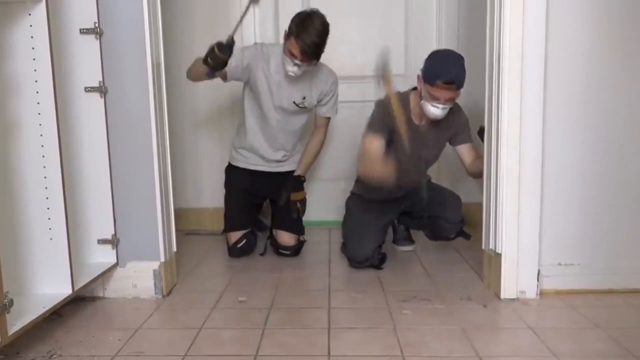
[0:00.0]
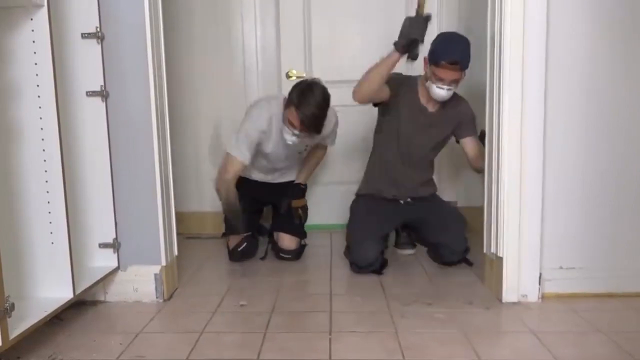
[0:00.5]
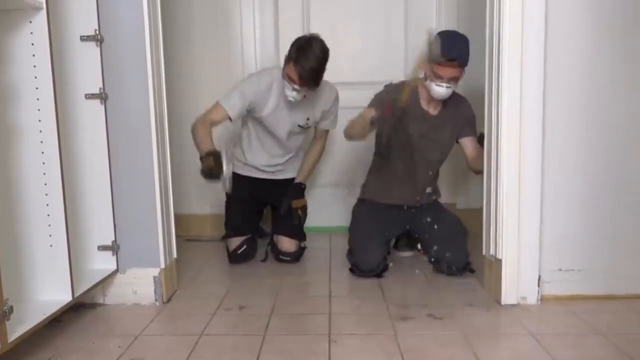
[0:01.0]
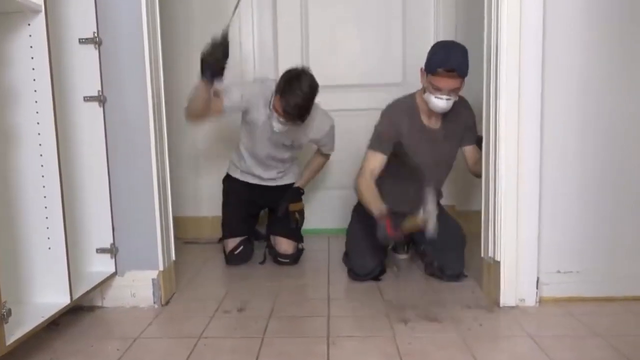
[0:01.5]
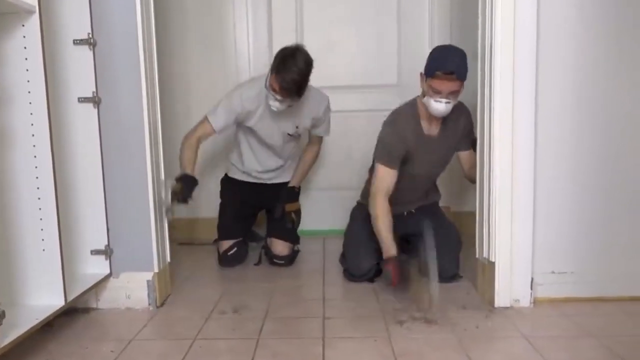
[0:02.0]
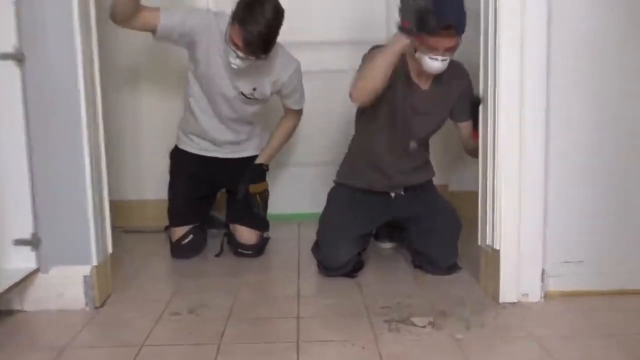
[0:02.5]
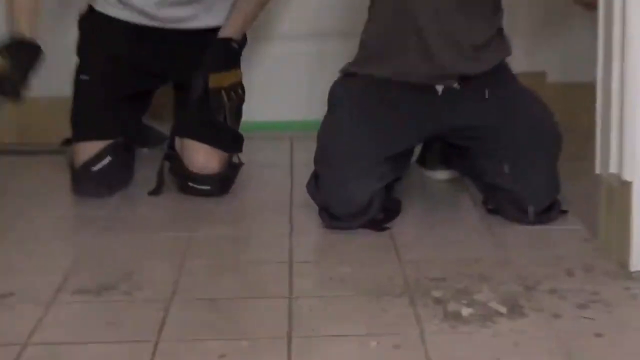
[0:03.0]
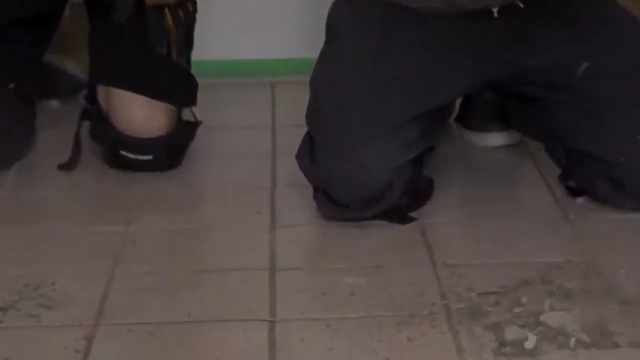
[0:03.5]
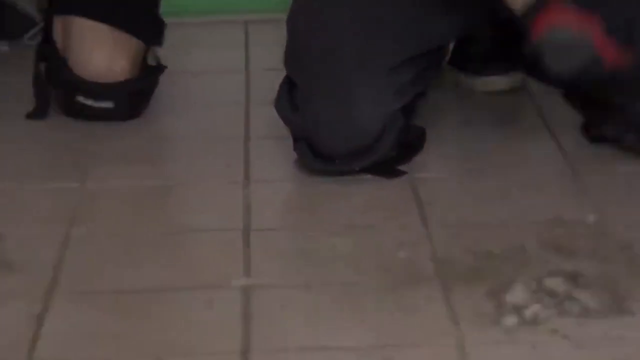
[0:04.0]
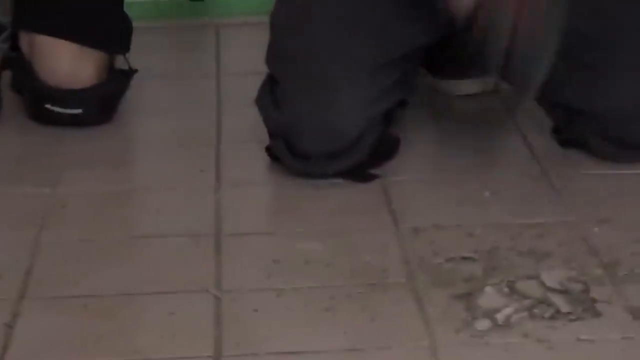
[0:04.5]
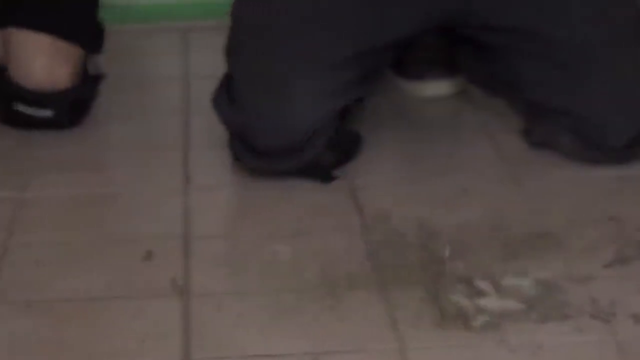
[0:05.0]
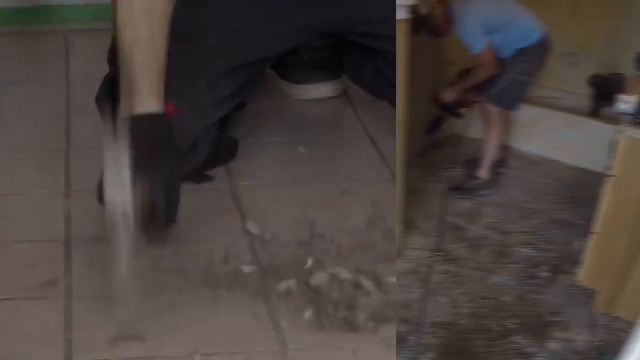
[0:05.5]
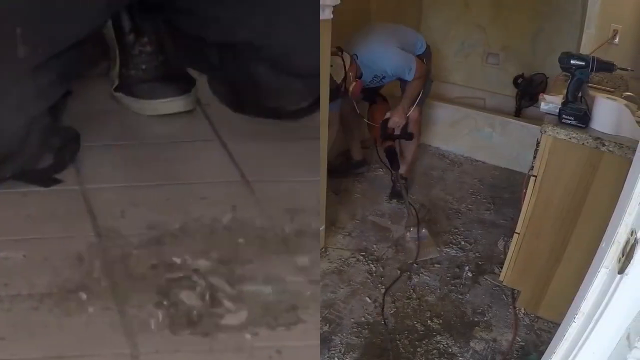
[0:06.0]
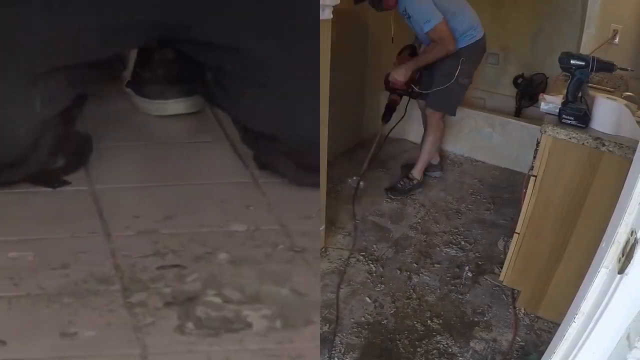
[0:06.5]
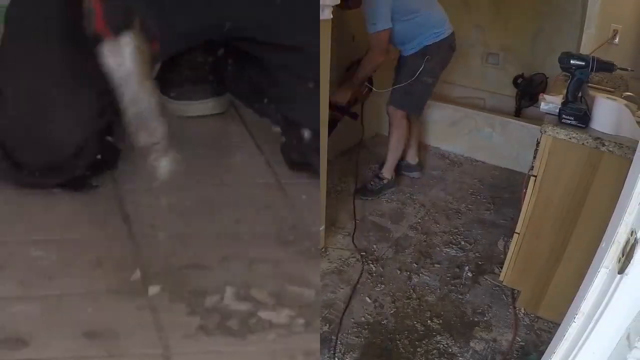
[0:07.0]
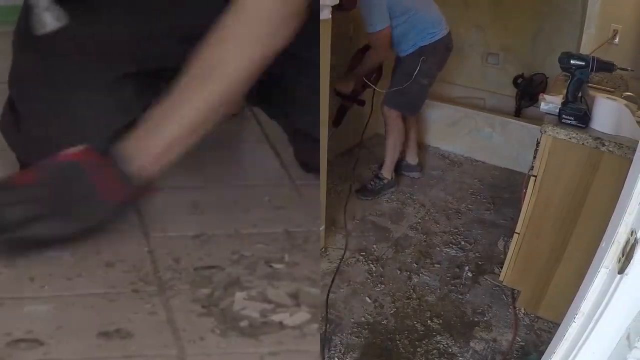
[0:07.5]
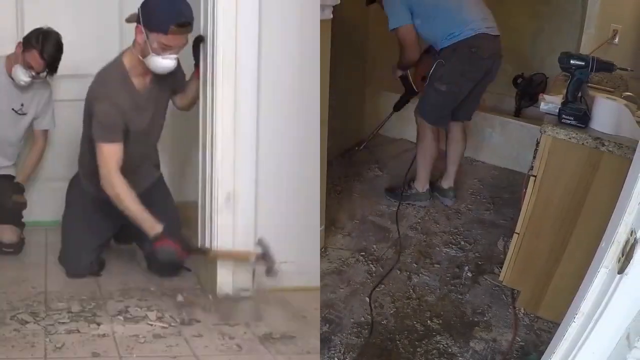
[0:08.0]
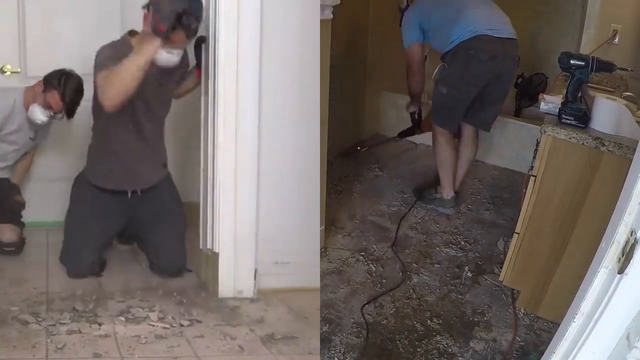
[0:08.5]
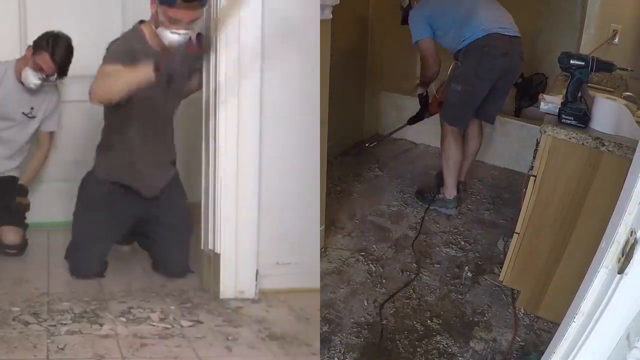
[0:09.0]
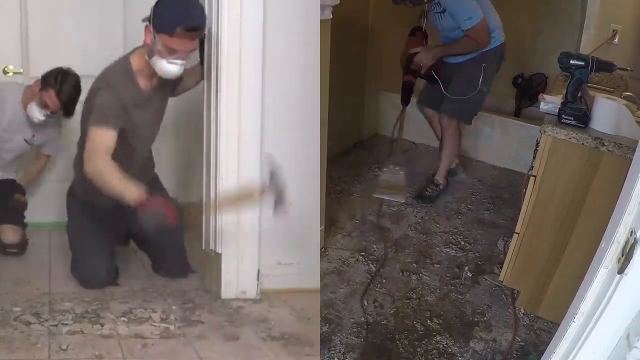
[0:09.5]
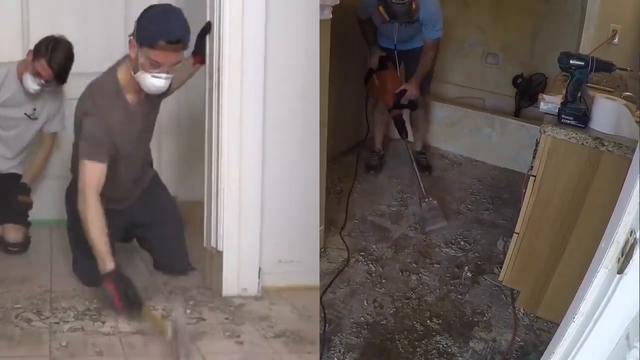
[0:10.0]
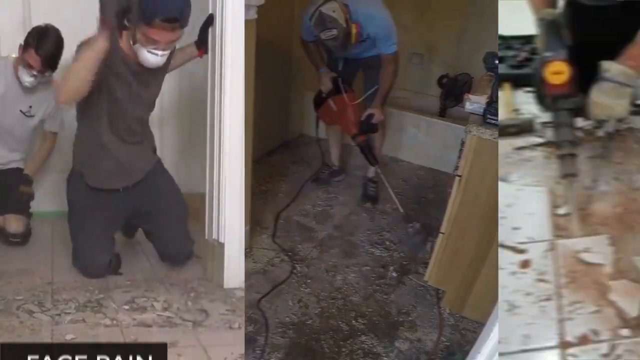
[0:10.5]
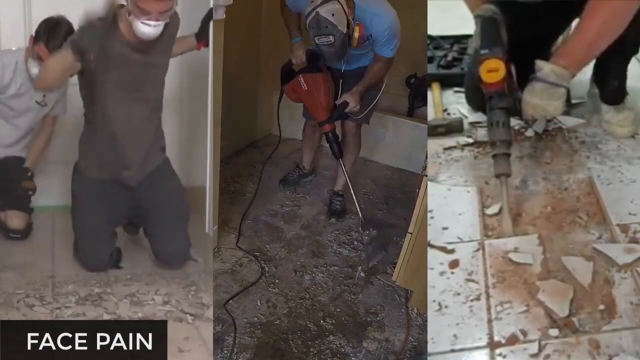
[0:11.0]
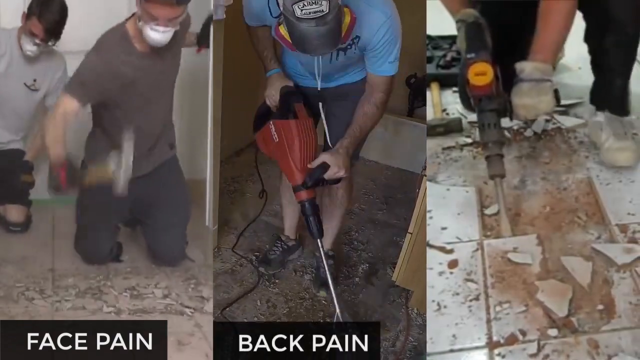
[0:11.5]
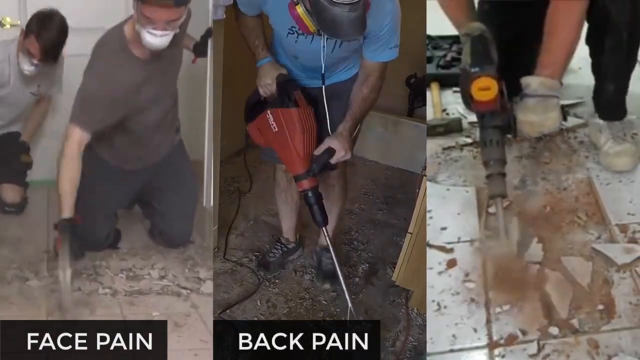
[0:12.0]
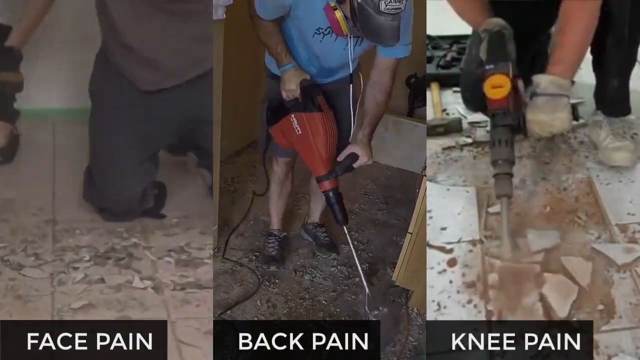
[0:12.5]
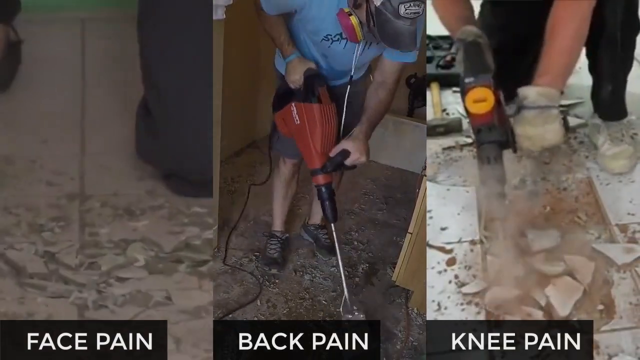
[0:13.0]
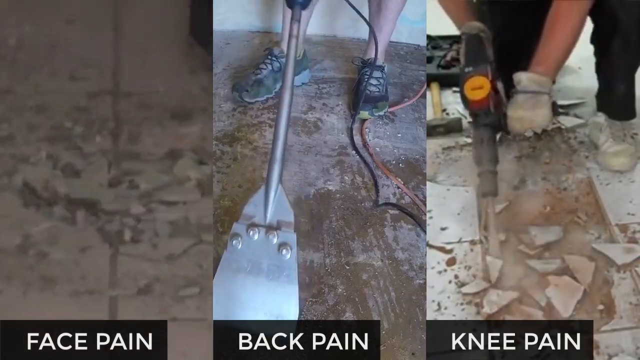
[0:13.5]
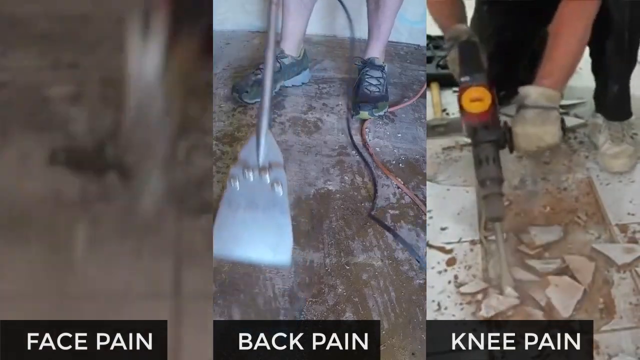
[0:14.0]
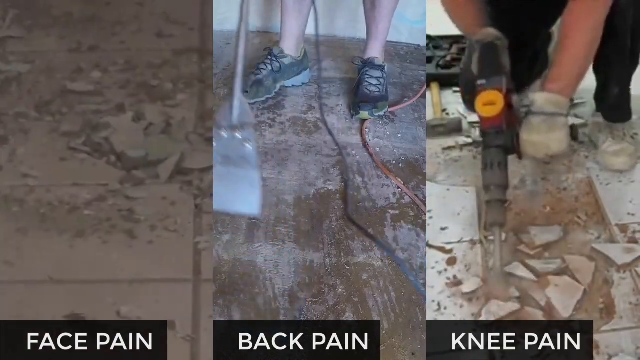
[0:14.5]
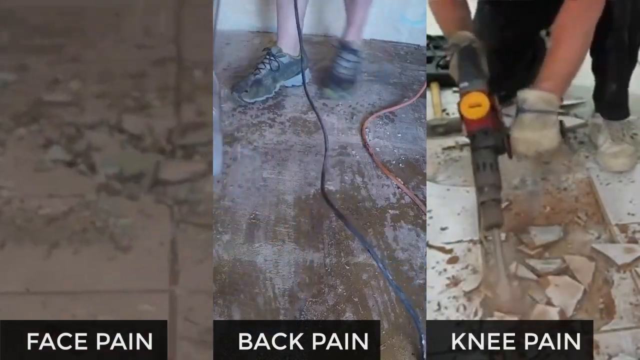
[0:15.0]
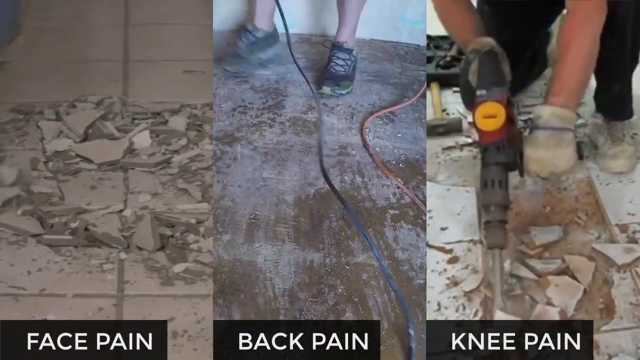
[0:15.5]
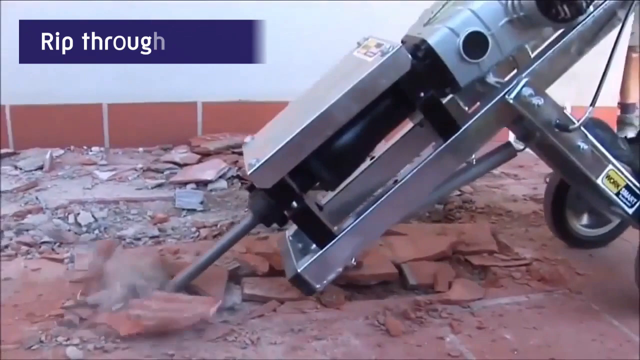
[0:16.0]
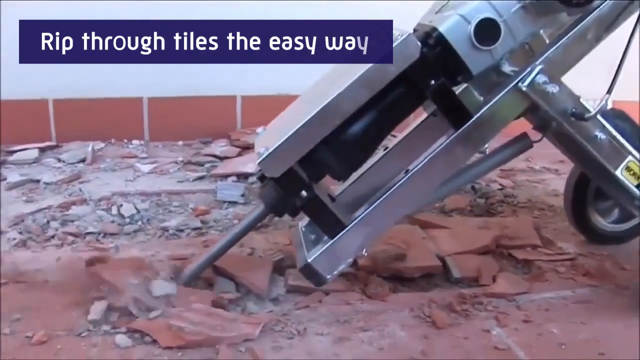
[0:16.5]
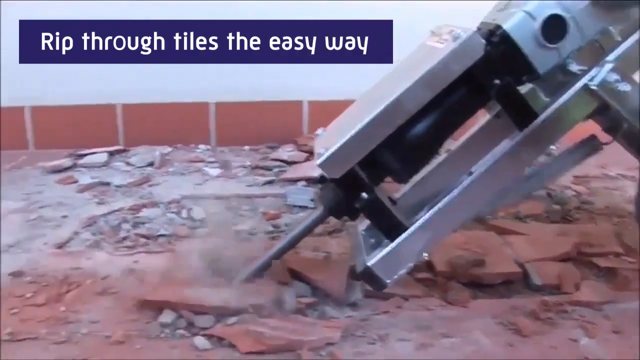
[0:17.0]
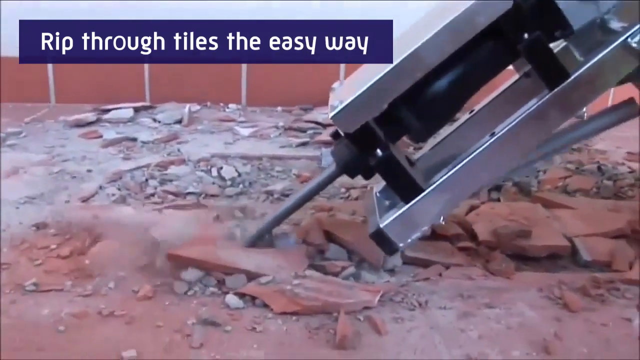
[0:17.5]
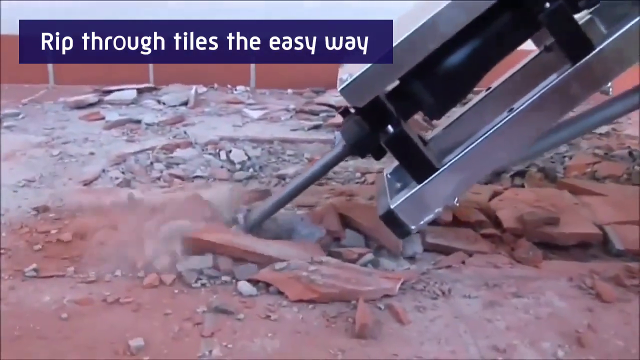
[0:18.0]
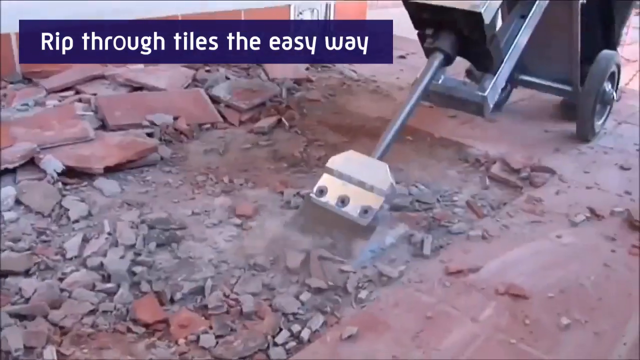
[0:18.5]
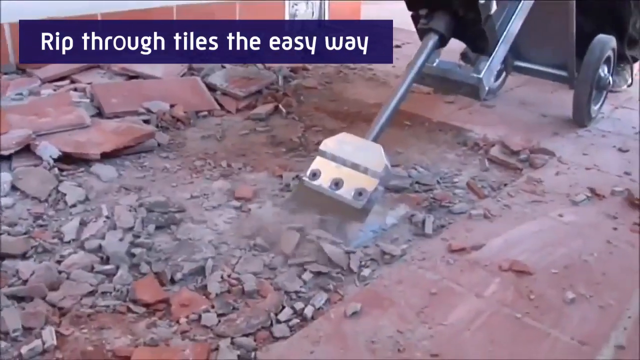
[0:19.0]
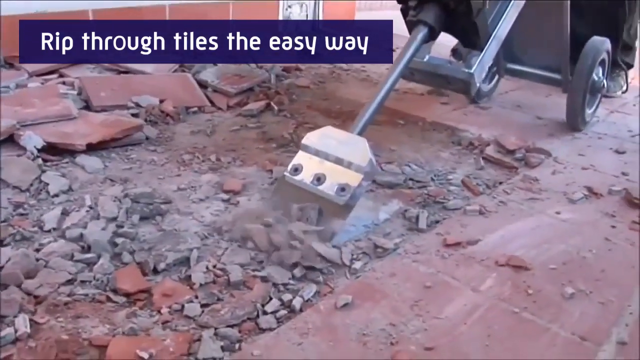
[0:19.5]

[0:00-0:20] Two men kneel on the floor, pounding the tiles with hammers to remove them. They appear to be in a room. Both wear black trousers and white face masks; one wears a white t-shirt and the other a brown t-shirt. In another video, a man wearing gray shoes uses a machine to finish up where the tiles have been chipped, removing them and cleaning up with the machine. A third video pops up over the picture, showing a man standing outside, drilling the ground to remove outdoor tiles.